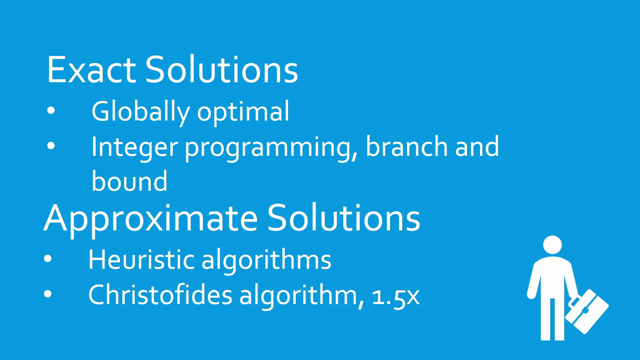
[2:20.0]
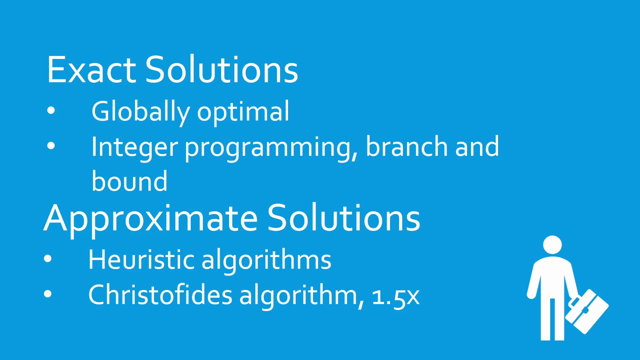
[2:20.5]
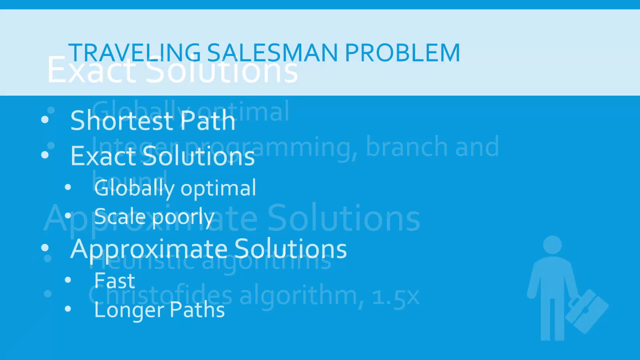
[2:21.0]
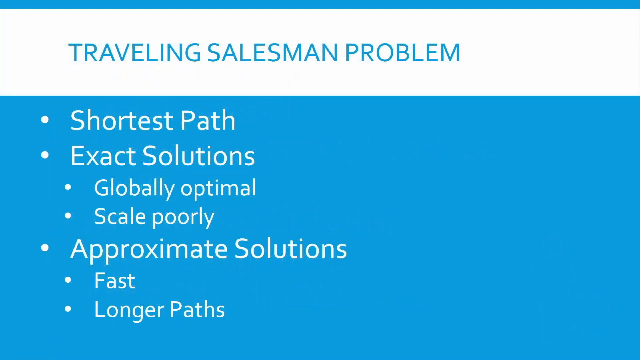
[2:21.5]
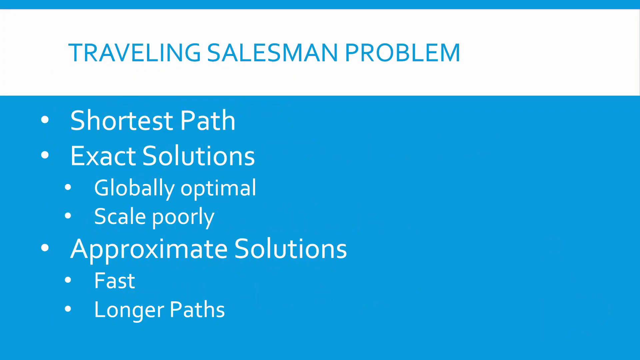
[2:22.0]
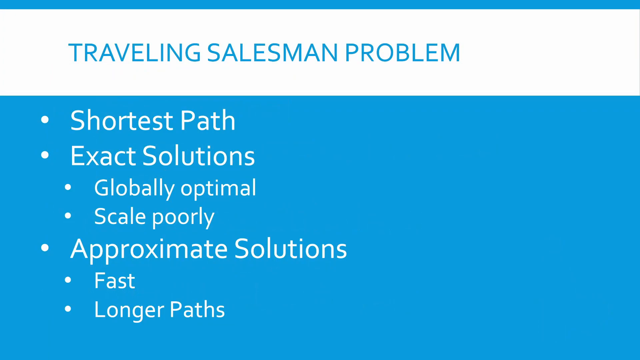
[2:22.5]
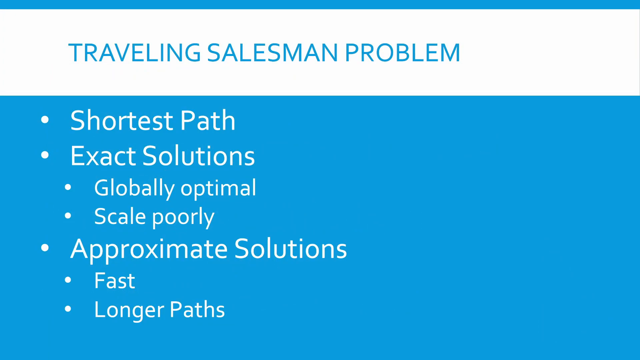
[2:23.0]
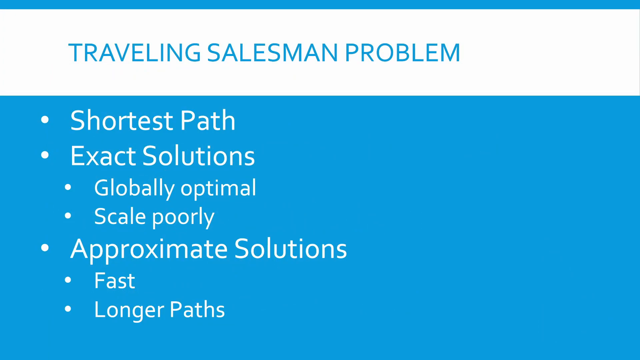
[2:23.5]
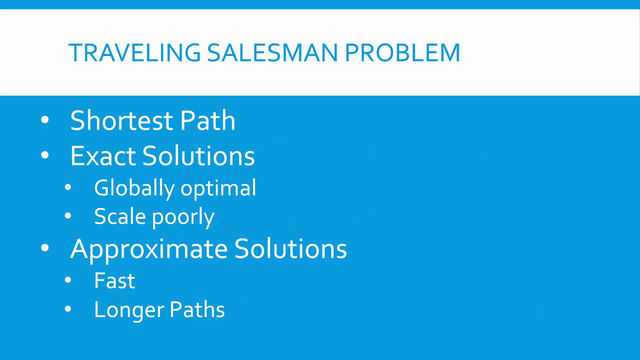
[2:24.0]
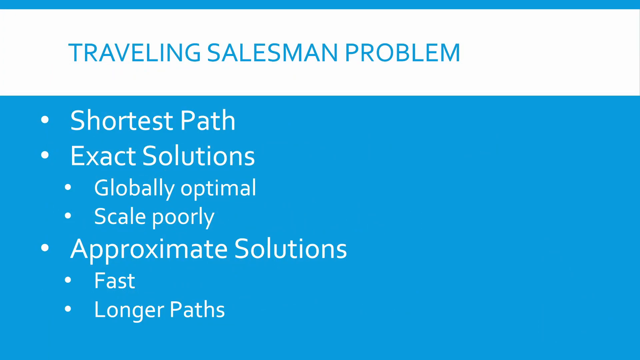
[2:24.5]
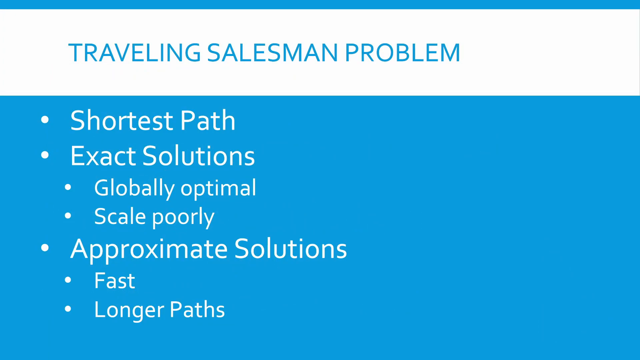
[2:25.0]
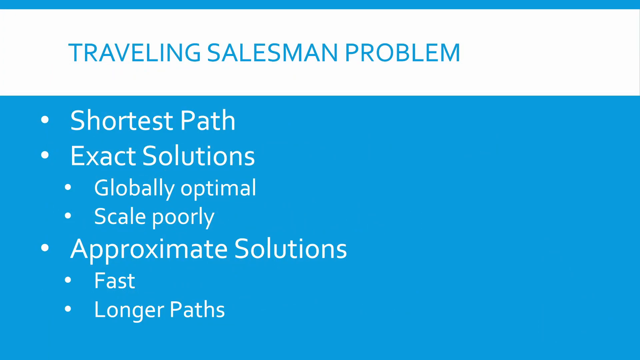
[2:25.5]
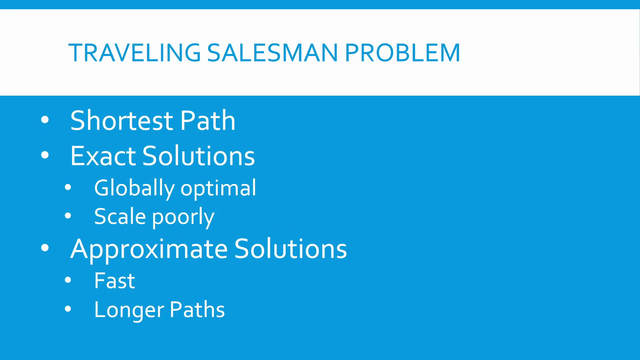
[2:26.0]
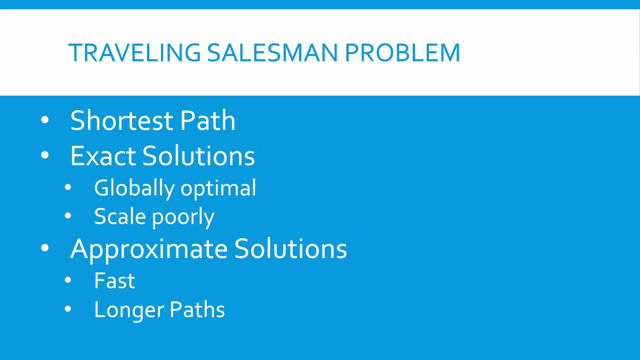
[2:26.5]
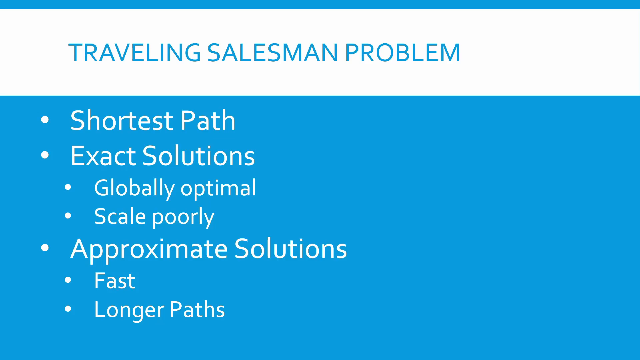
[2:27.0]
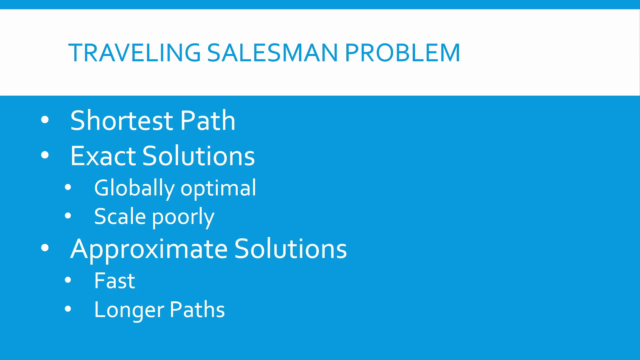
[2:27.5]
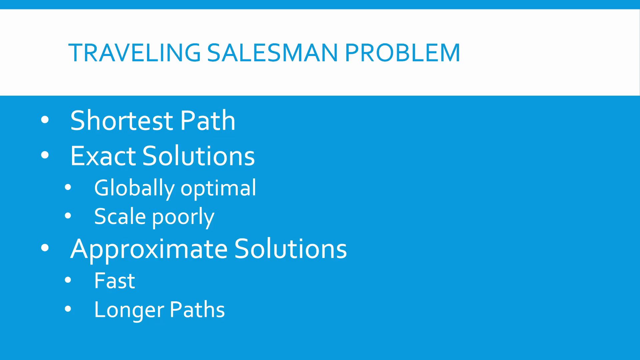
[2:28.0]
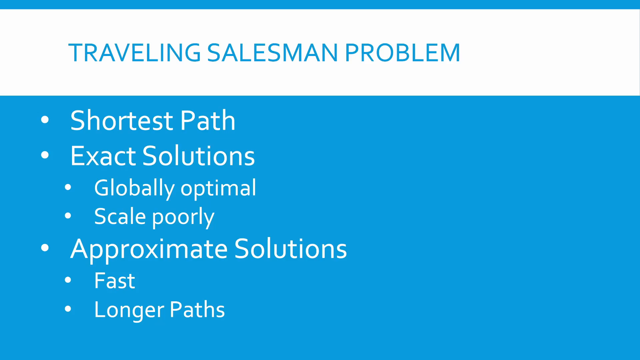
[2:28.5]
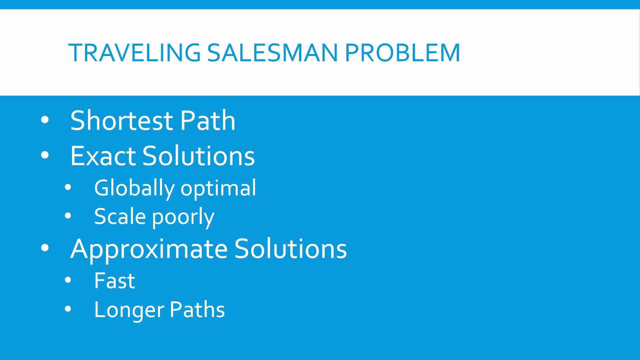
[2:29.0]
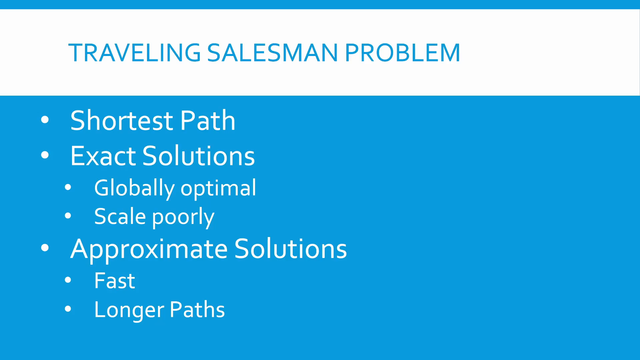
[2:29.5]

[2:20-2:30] The video has blue slides with white font. On this slide, a businessman who looks like the man on a bathroom door, holding a briefcase, is at the bottom. The text reads "exact solutions," with bullet points "globally optimal" and "integer programming, branch and bound," then "approximate solutions," with bullet points "heuristic algorithms" and "Christofides algorithms, 1.5x." The video then moves to a slide reading "traveling salesman problem" with a white border and blue letters, listing "Shortest path, exact solutions, globally optimal, scale poorly, approximate solutions, fast, and longer paths."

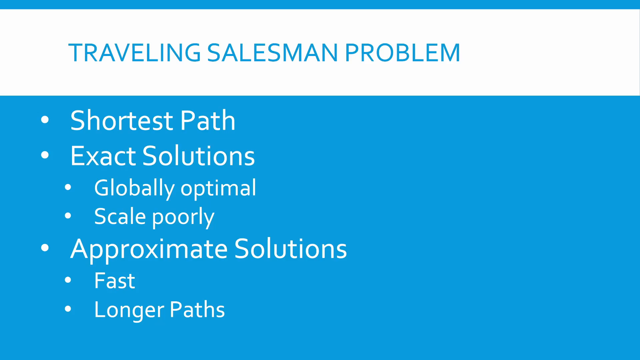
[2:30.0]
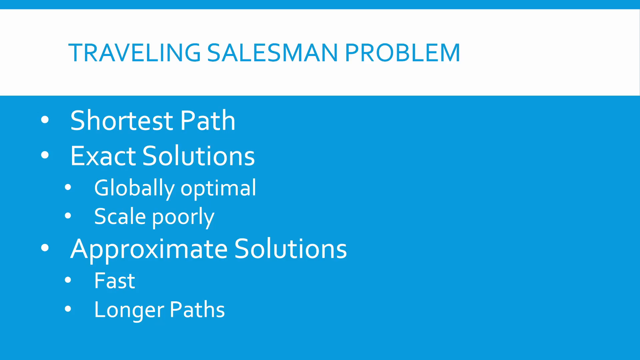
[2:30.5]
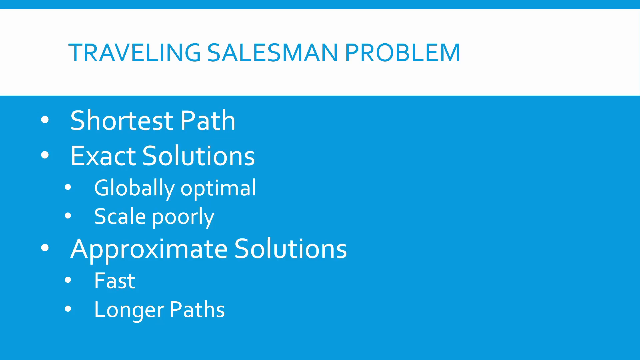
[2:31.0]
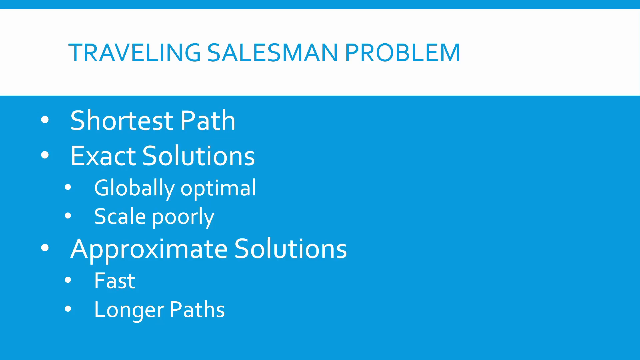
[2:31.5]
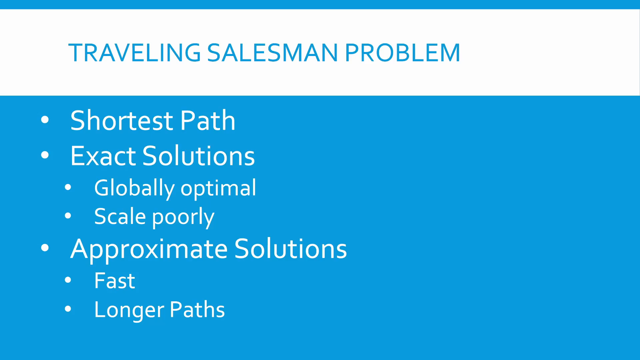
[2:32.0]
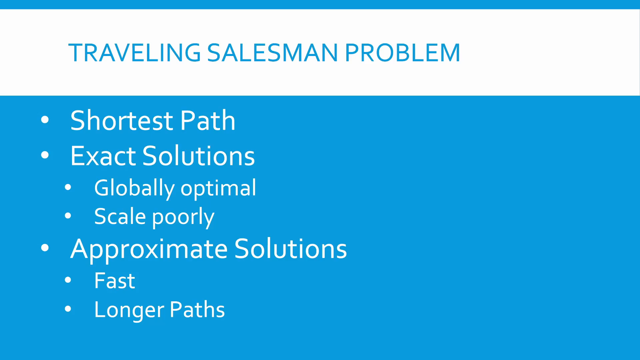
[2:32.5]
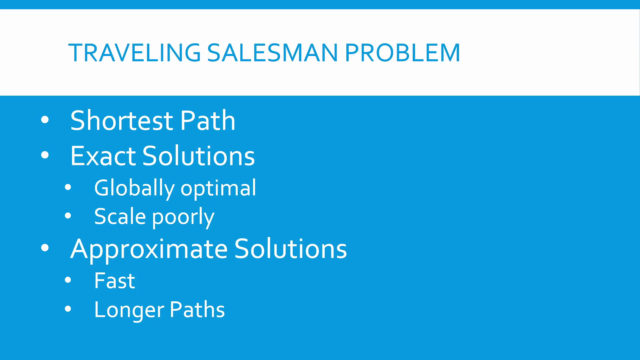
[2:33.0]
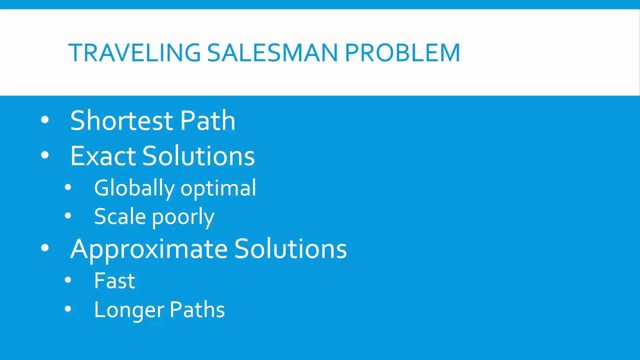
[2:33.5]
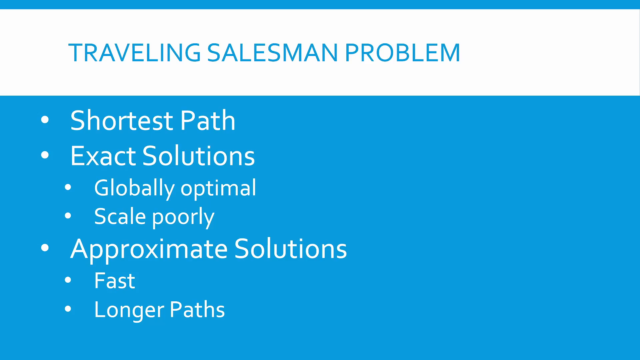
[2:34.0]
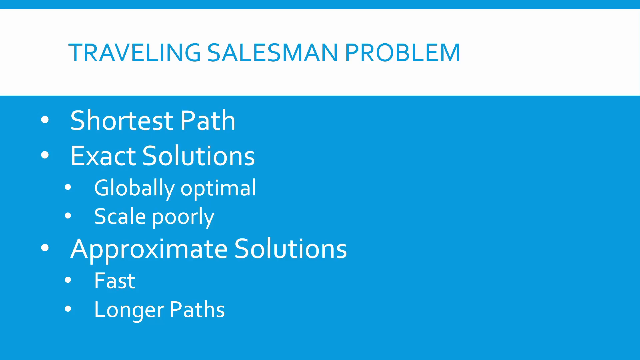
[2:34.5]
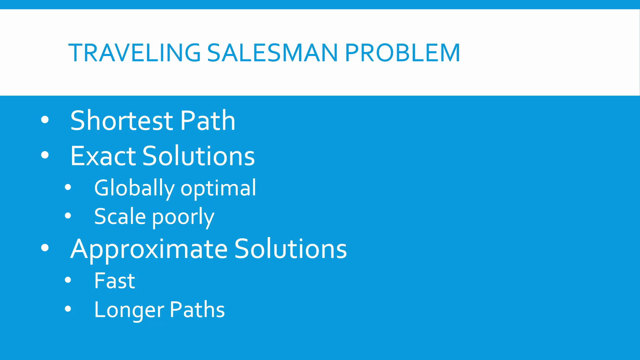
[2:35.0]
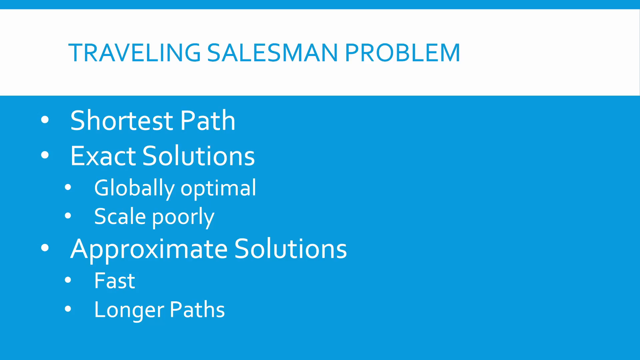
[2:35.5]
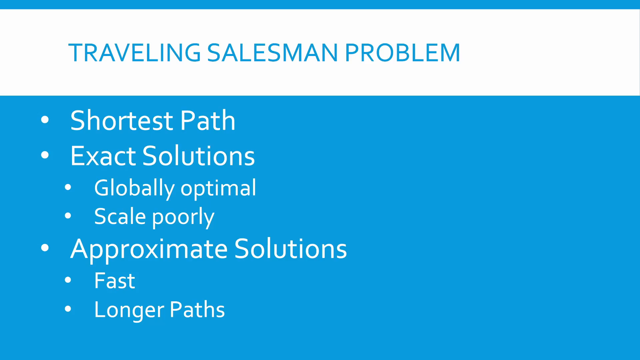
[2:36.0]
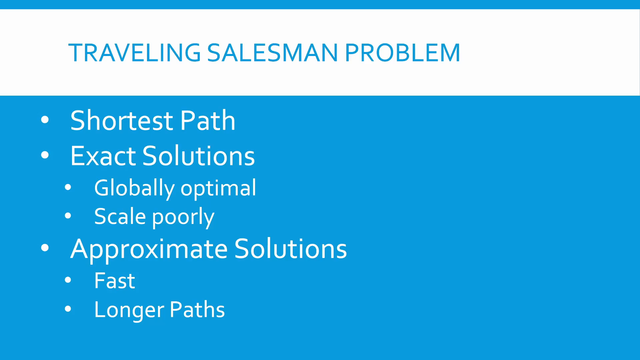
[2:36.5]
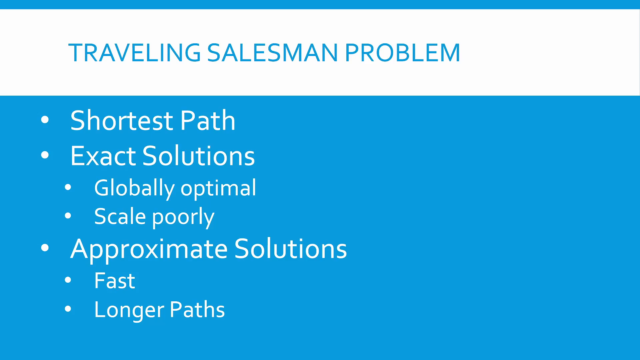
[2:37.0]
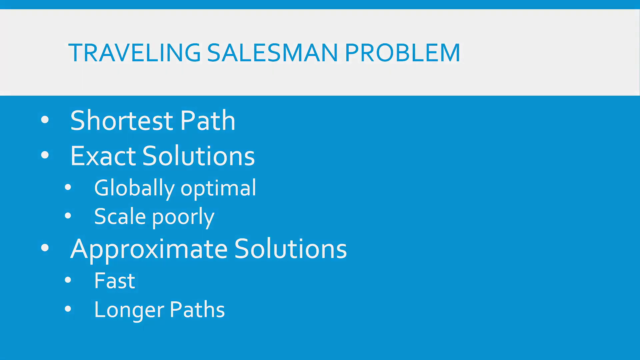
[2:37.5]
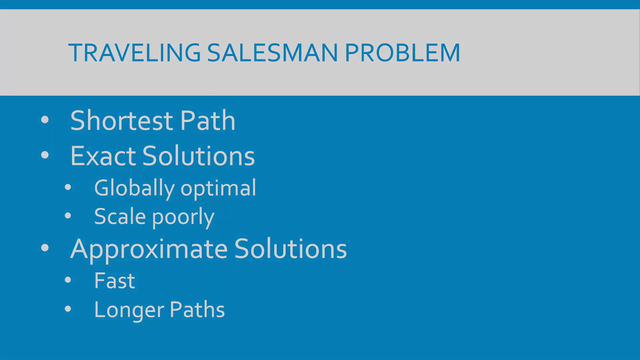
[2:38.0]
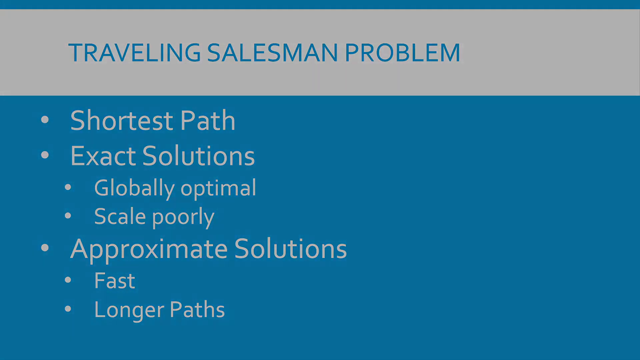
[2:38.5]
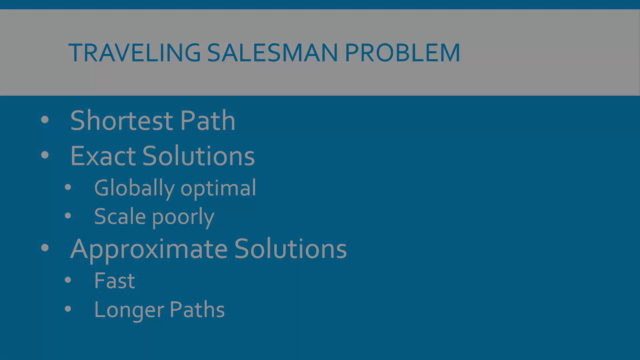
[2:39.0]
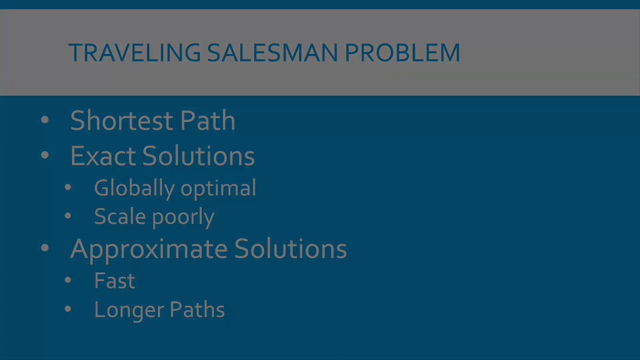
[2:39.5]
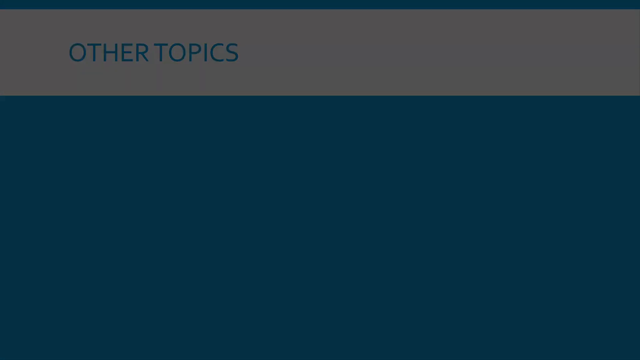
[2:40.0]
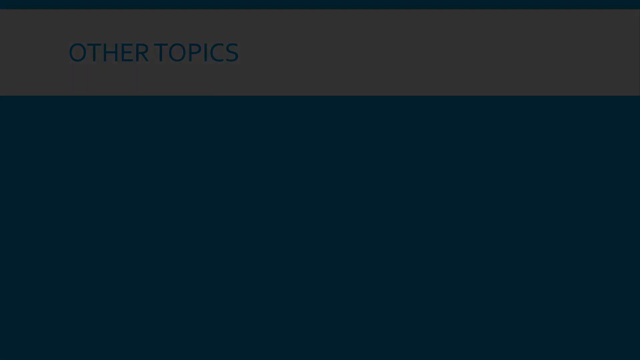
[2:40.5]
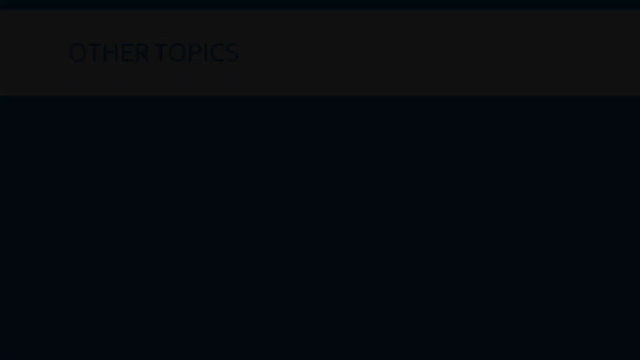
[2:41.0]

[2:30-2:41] A blue slide with a white border at the top reads "traveling salesman problem, shortest path, exact solutions, globally optimal, scaled poorly, approximate solutions, fast, longer paths." The slide then fades into "other topics," which has the same blue background, apparently white lettering, and the white bar.